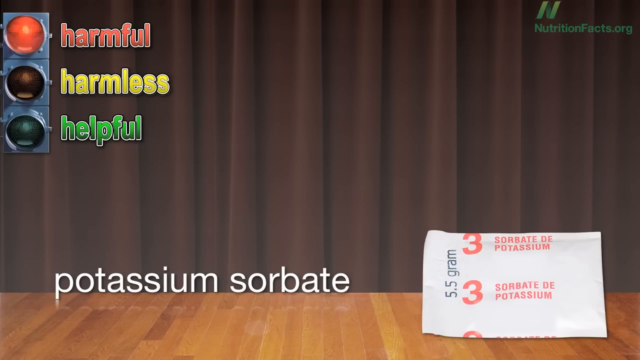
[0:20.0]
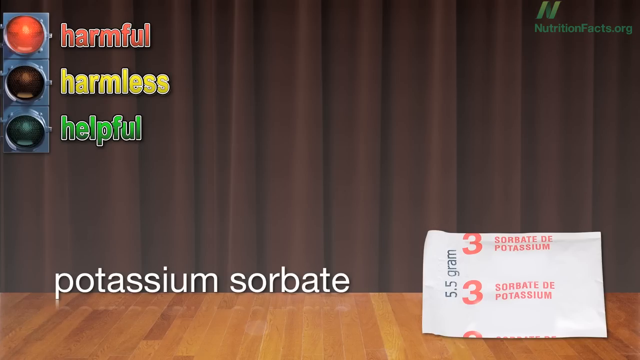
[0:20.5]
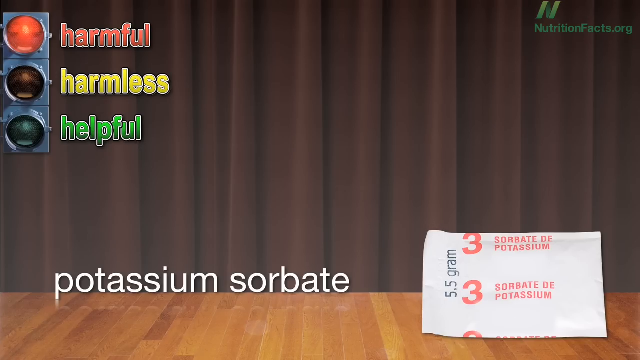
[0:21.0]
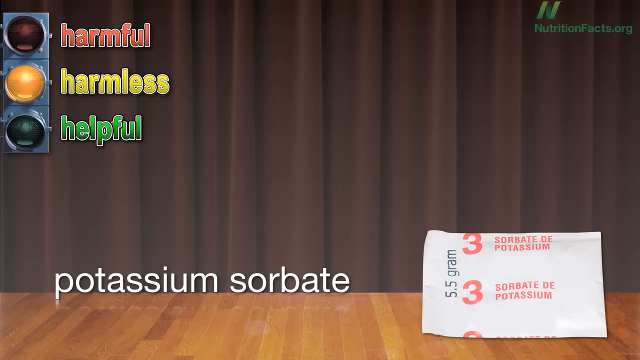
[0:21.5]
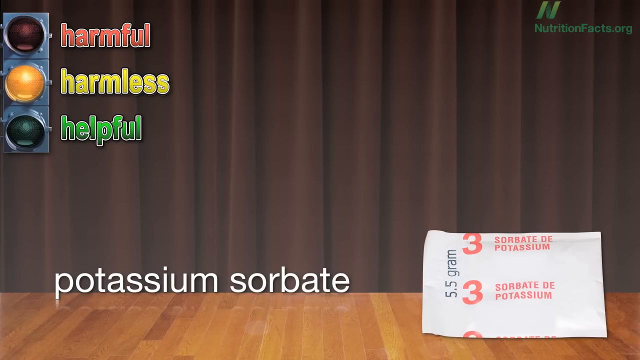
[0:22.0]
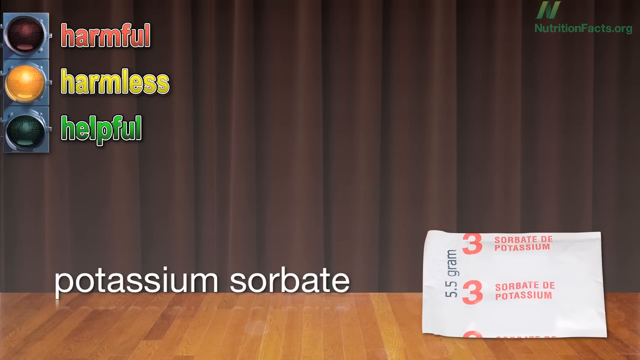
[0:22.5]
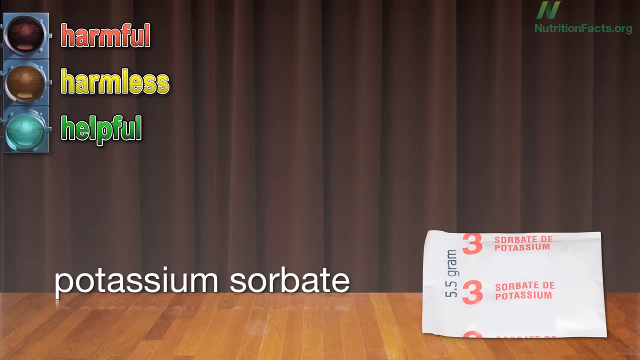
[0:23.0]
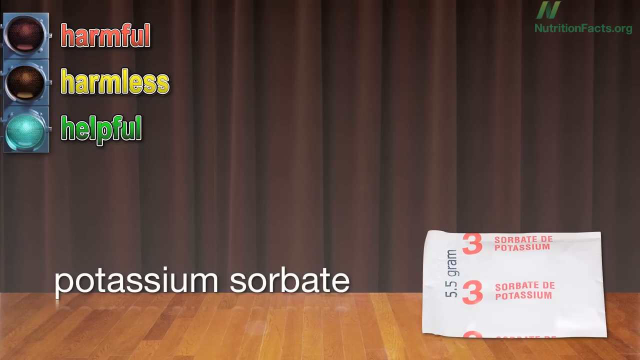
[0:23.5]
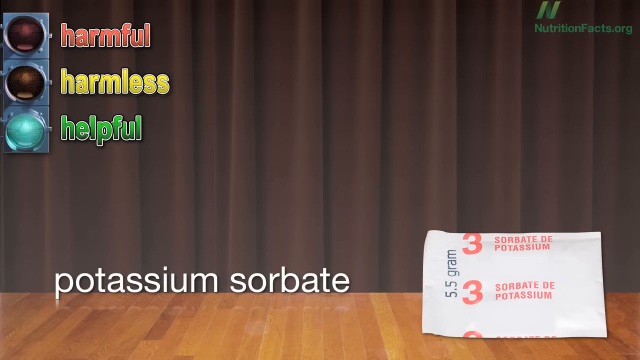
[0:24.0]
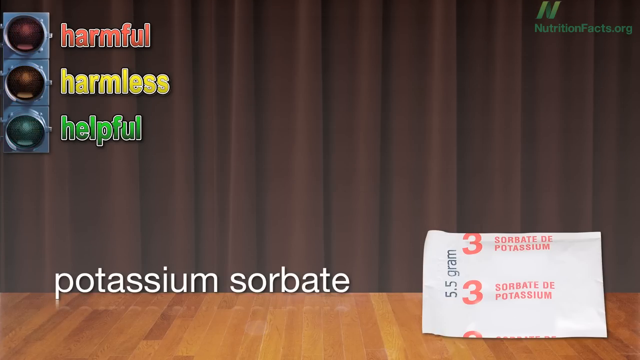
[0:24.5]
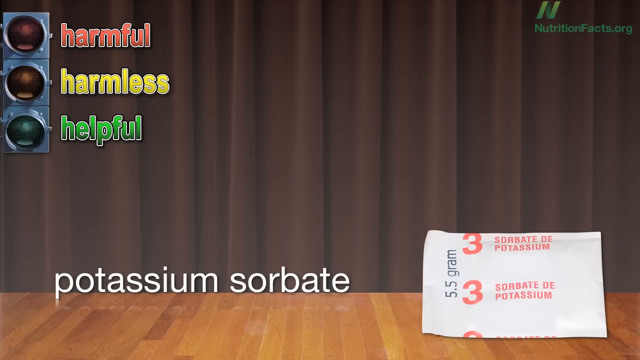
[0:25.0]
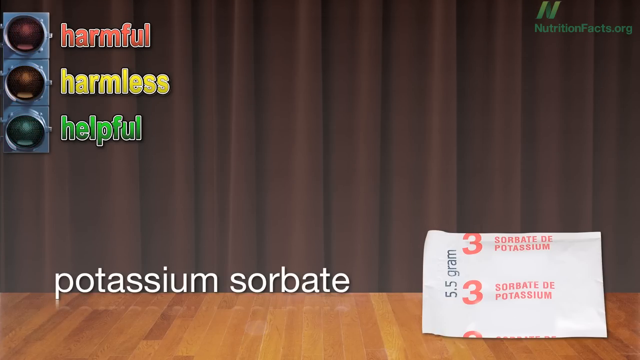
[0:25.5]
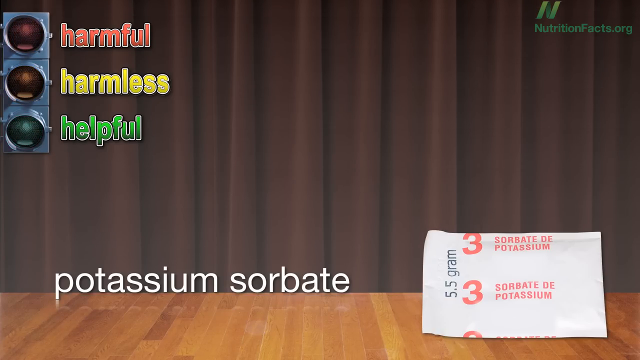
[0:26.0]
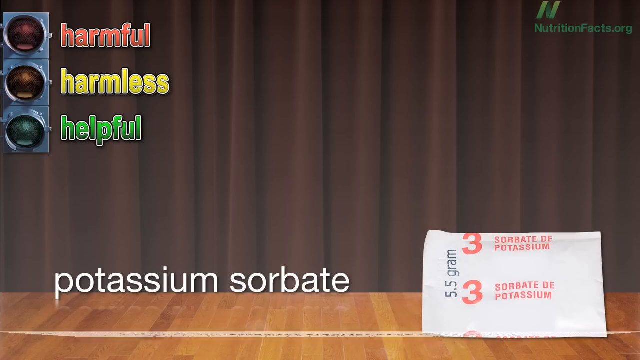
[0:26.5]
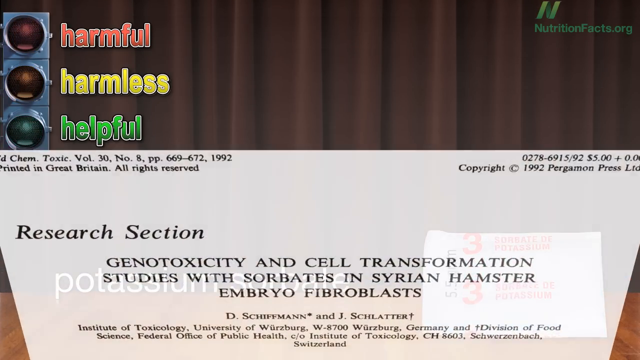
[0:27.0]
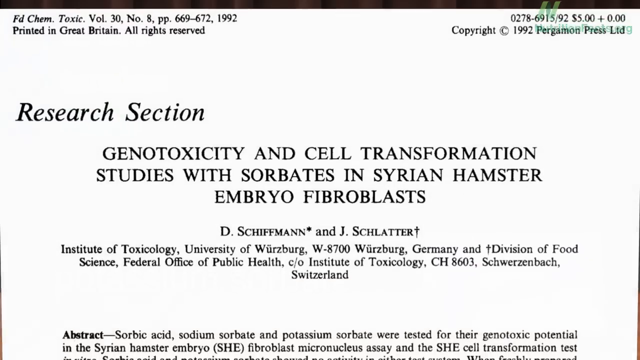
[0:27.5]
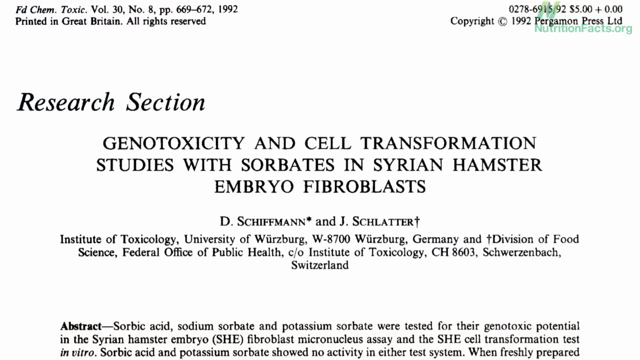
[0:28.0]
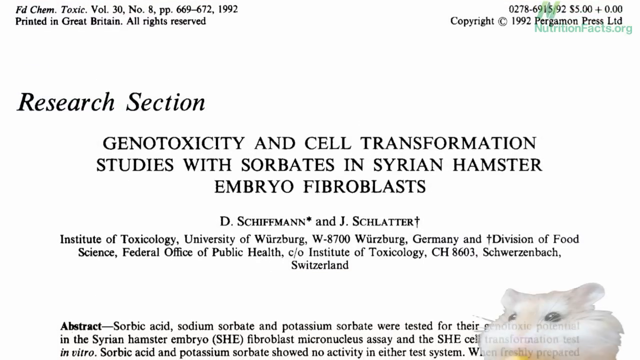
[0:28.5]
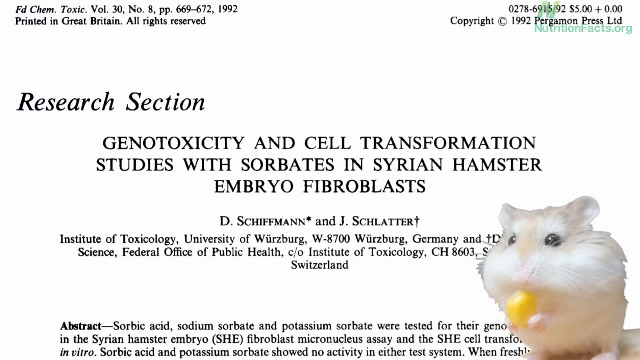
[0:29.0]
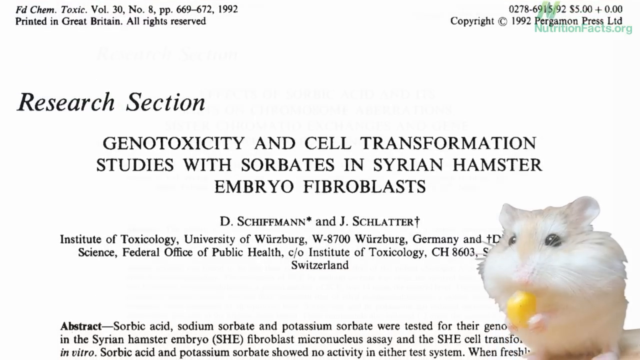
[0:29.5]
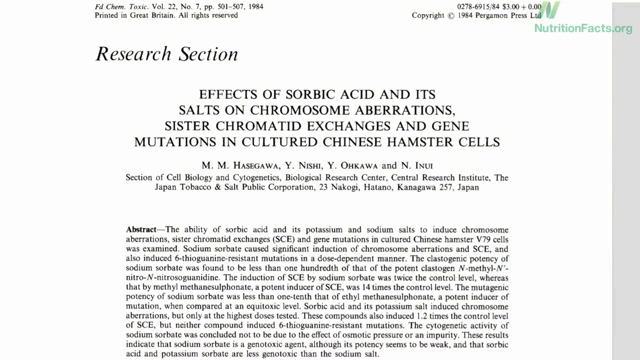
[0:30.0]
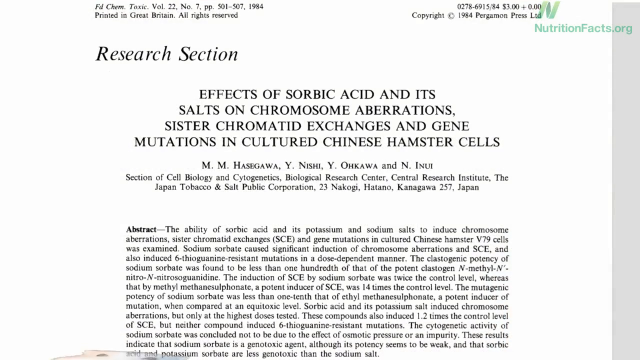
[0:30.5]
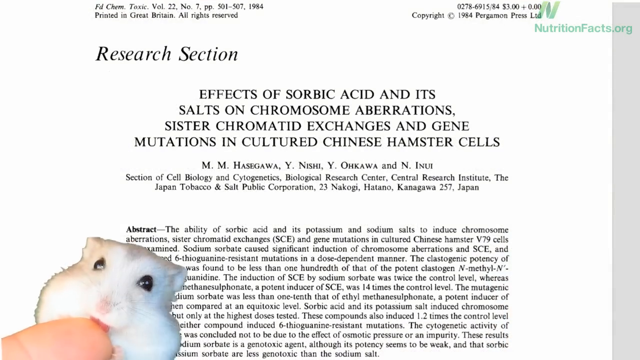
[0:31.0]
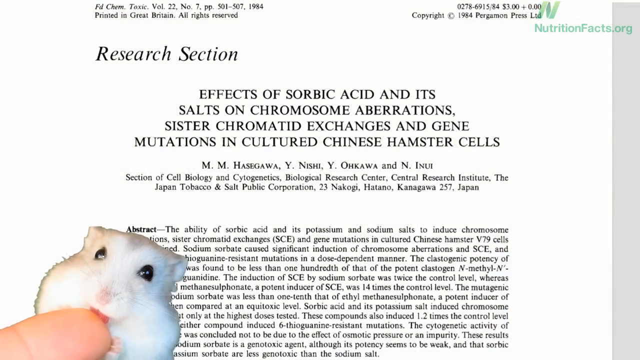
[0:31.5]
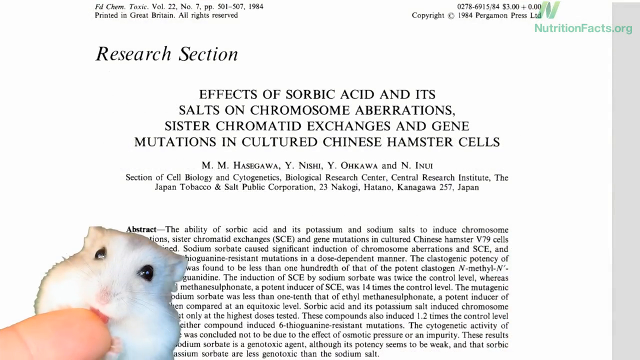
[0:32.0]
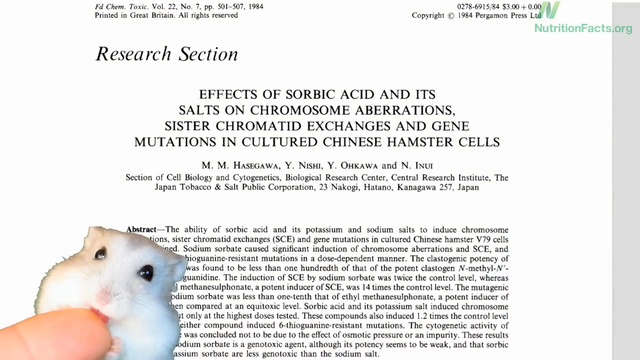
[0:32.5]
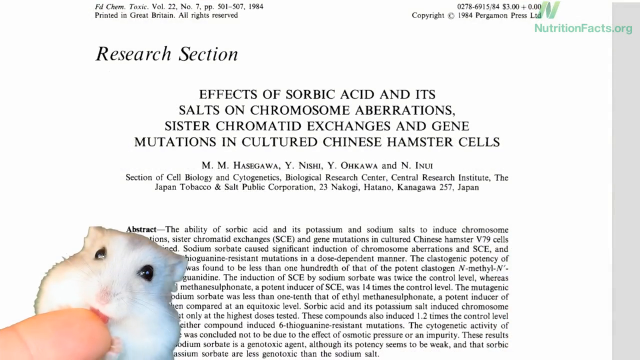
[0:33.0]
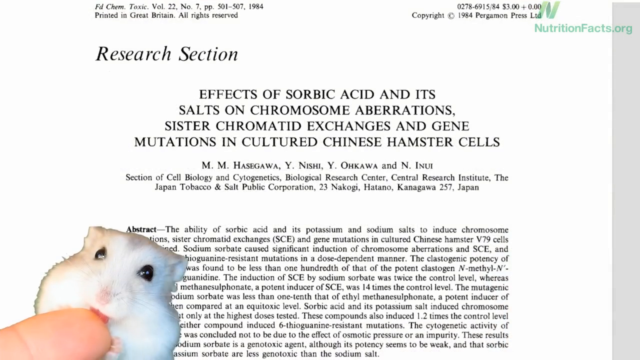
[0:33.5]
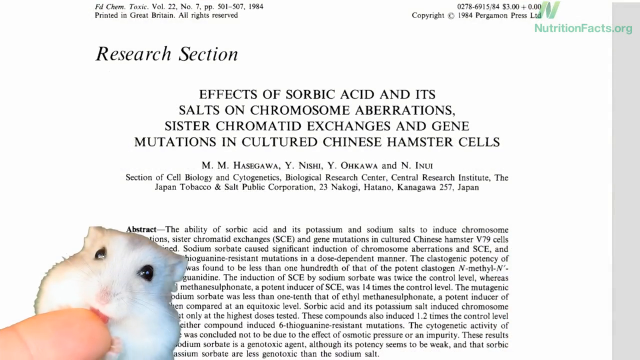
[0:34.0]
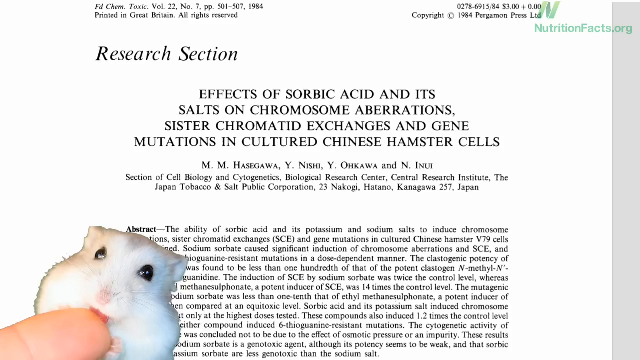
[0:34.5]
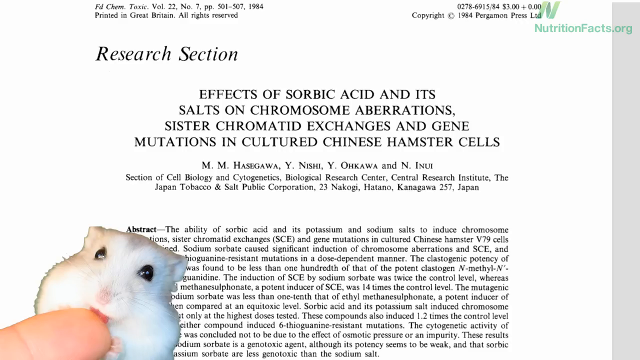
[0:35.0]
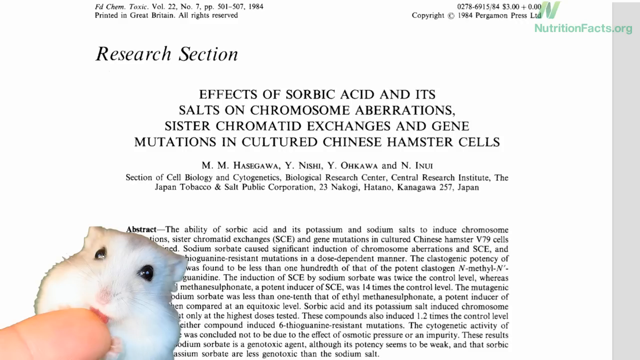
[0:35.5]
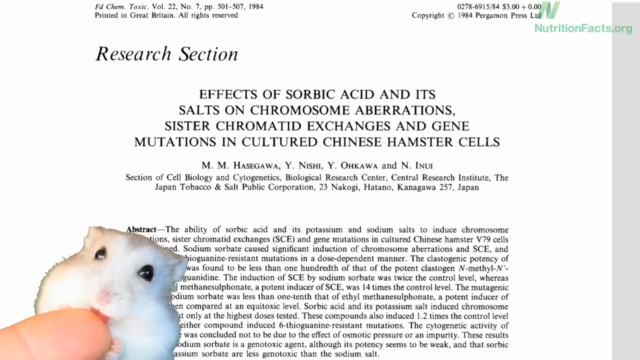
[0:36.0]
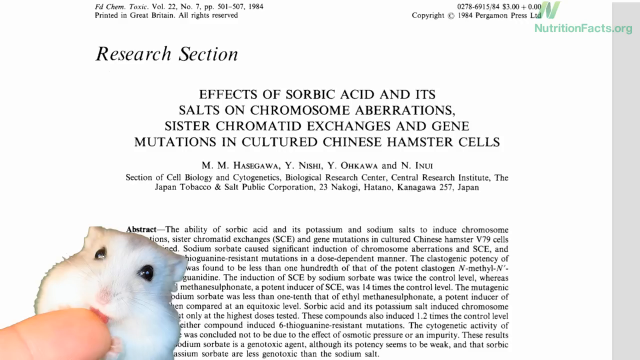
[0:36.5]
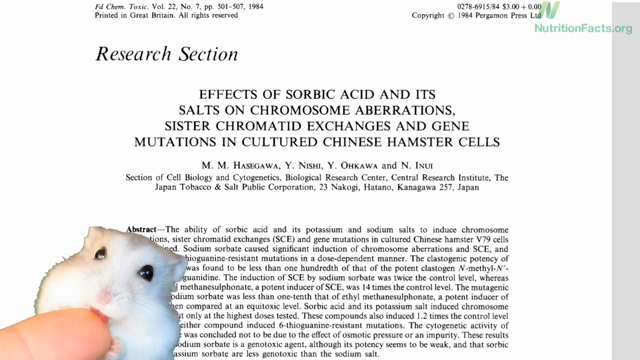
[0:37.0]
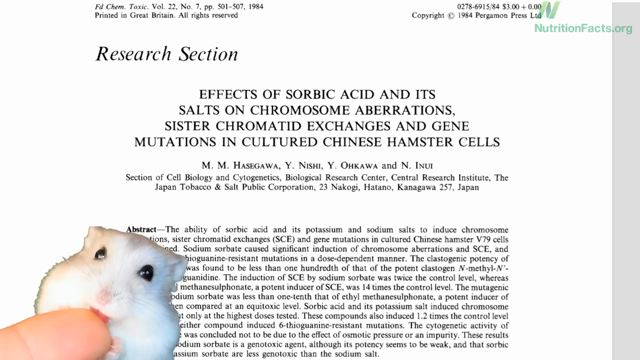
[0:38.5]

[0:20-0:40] The potassium sorbate screen continues, with the potassium sorbate on the bottom right showing 5.5 grams. The traffic light system changes, first to amber and then to green for helpful. The screen flips upwards to a new study titled "genotoxicity and cell transformation studies with sorbates in Syrian hamster embryo fibroblasts", in a scientific journal and from the Institute of Toxicology in Würzburg, Germany. A little white and cream hamster pops up from the right-hand side of the screen. Then the text reads "effect of sorbic acid and its salts on chromosome aberrations, sister chromatid exchanges, and gene mutations in cultured Chinese hamster cells", and a little orange, cream and white hamster pops up on the left-hand side of the screen. This study is published in Great Britain. Once both hamsters have popped up in turn, the video goes back to the potassium sorbate.